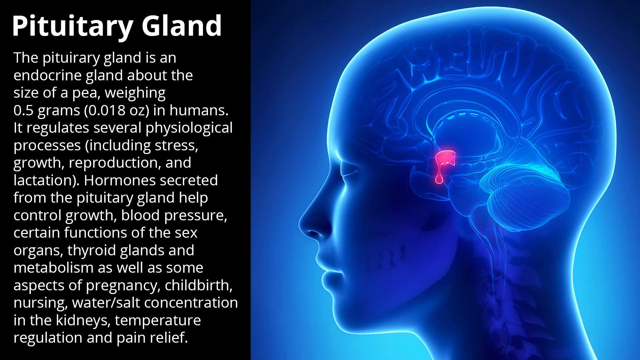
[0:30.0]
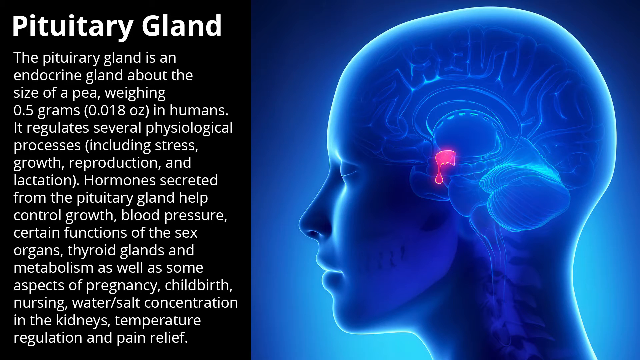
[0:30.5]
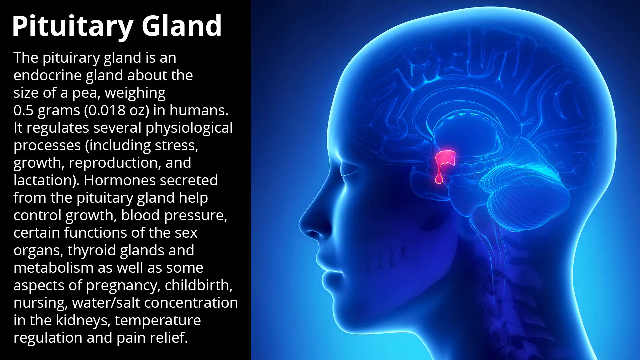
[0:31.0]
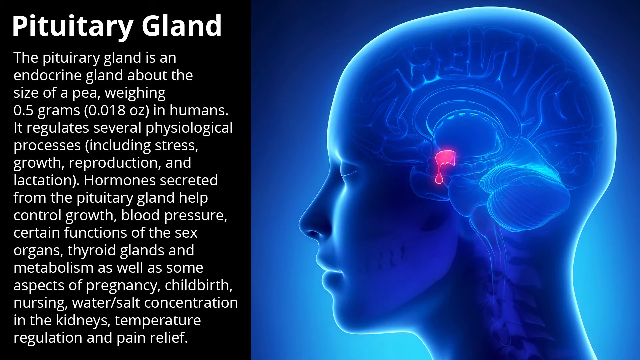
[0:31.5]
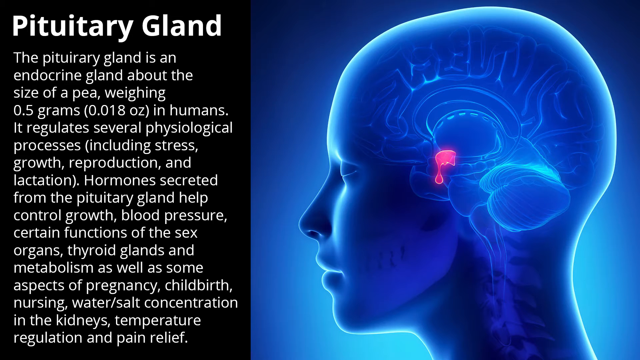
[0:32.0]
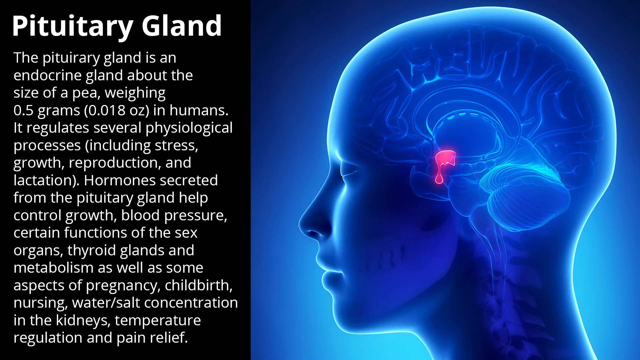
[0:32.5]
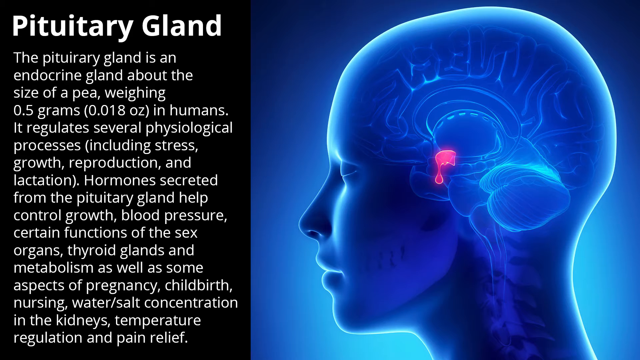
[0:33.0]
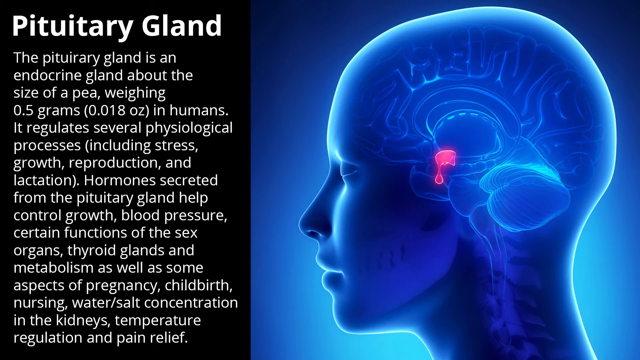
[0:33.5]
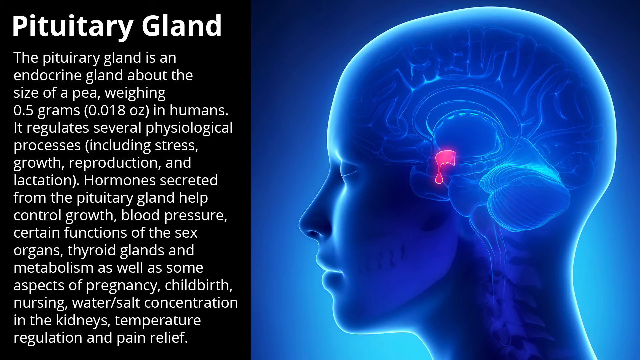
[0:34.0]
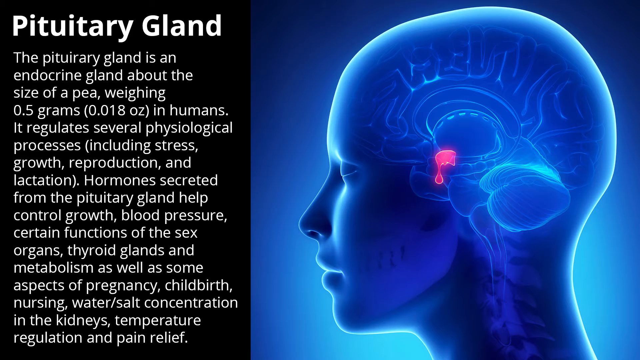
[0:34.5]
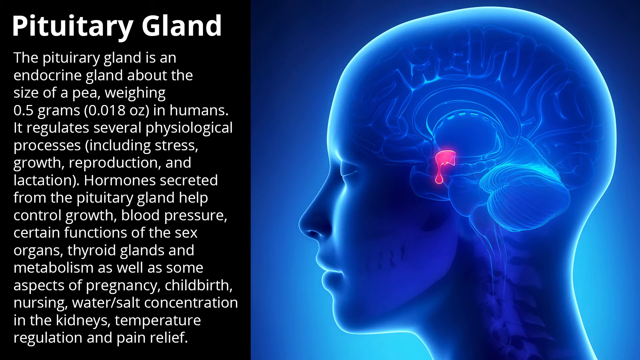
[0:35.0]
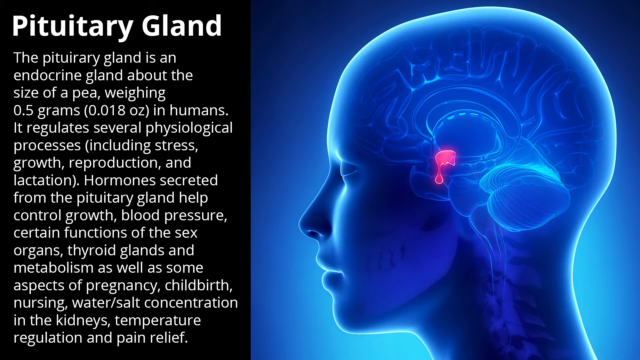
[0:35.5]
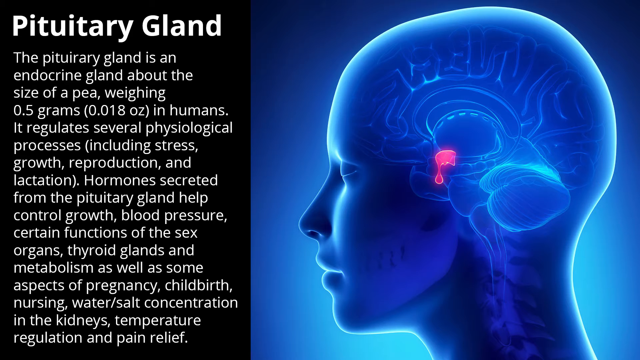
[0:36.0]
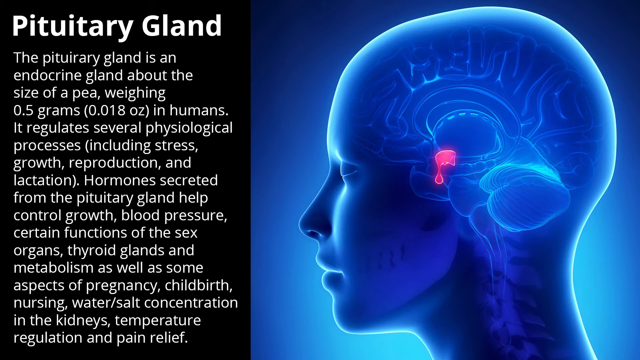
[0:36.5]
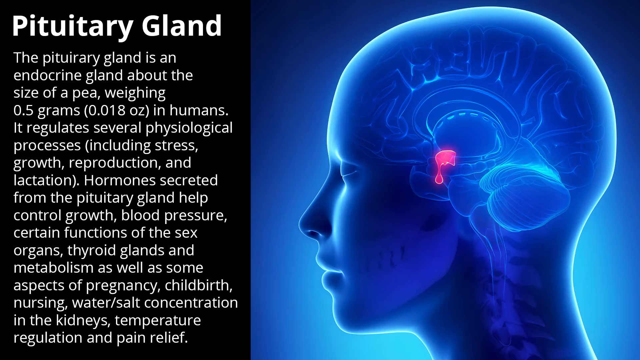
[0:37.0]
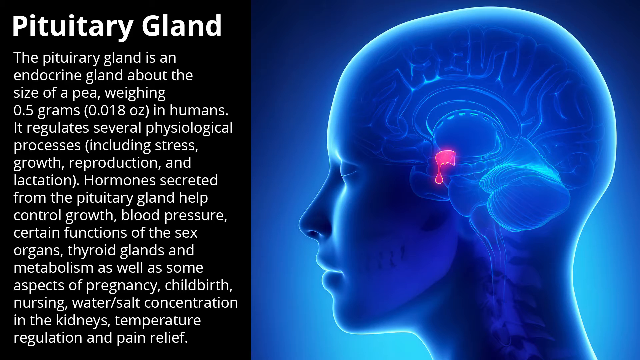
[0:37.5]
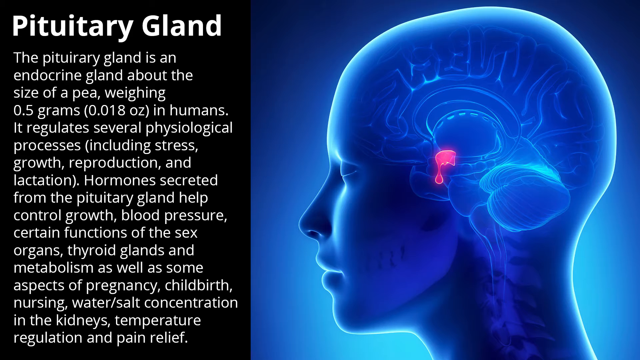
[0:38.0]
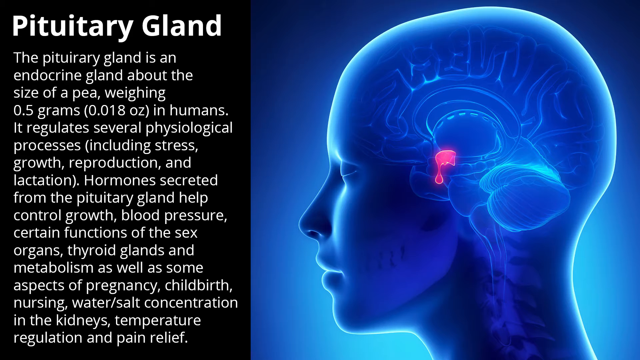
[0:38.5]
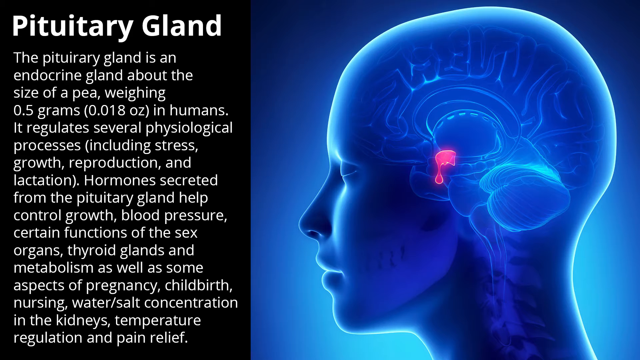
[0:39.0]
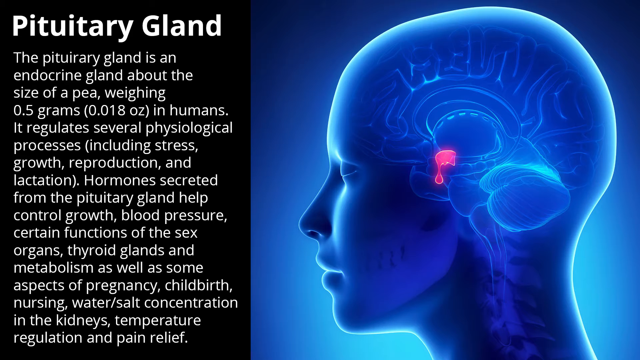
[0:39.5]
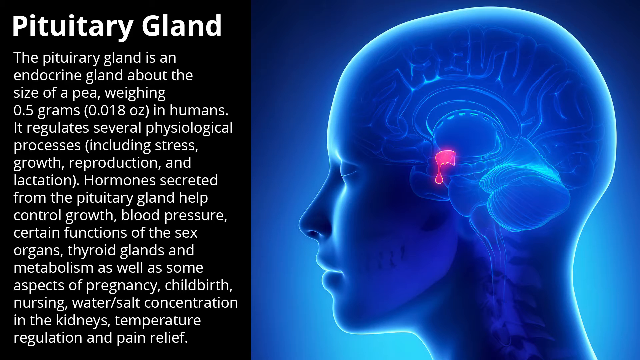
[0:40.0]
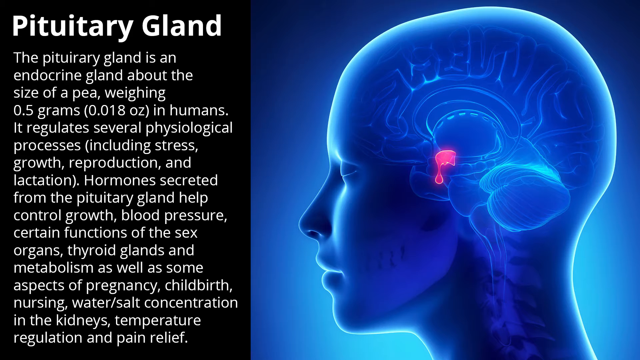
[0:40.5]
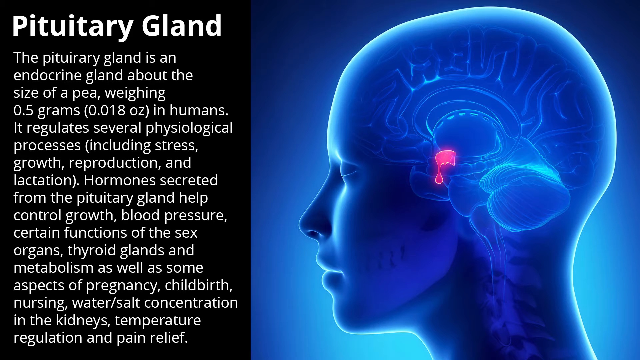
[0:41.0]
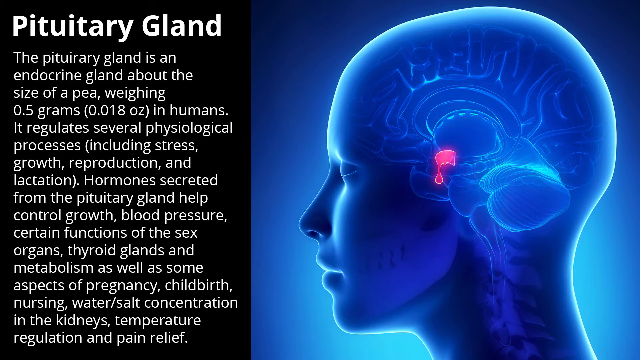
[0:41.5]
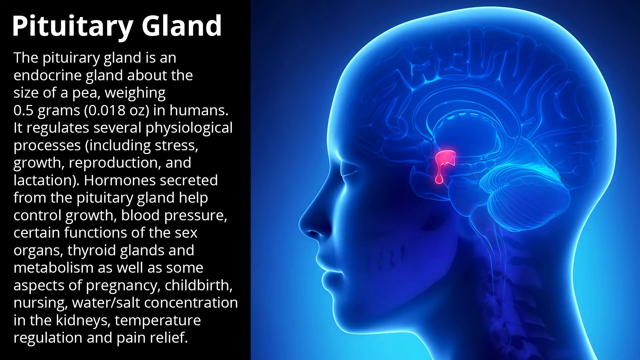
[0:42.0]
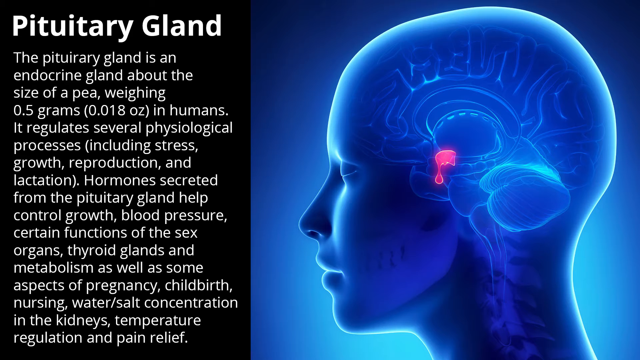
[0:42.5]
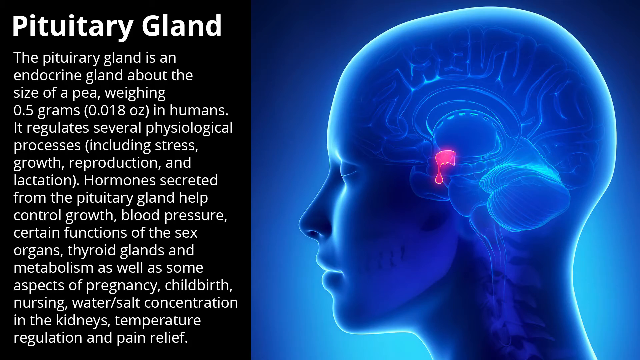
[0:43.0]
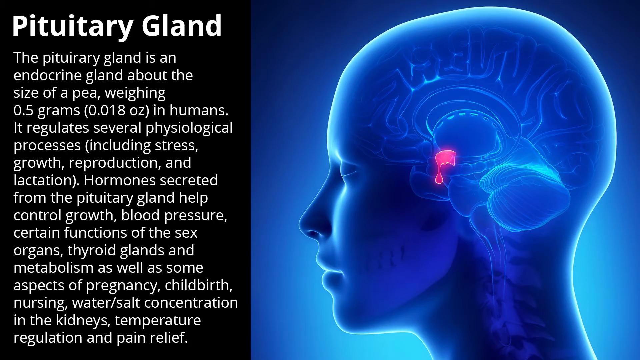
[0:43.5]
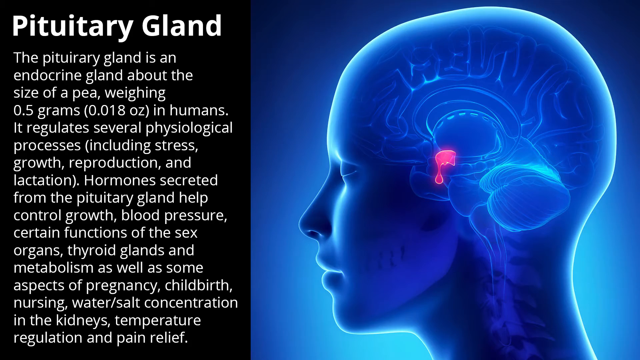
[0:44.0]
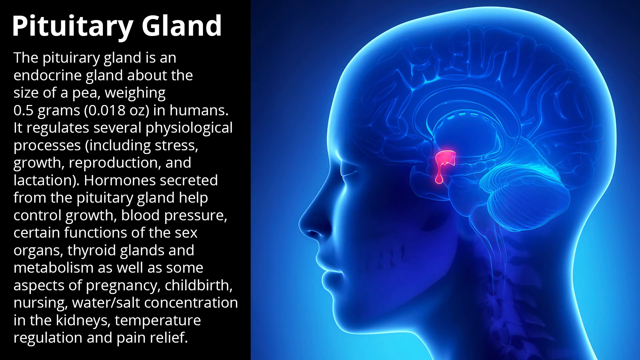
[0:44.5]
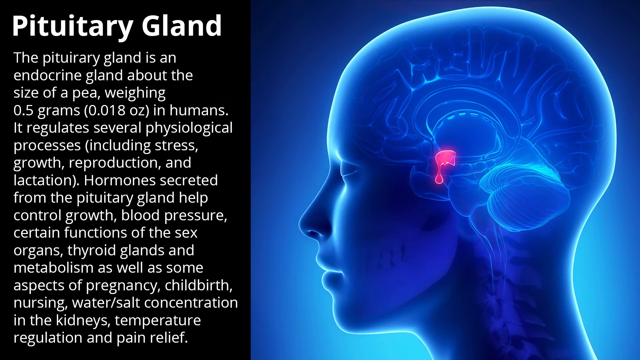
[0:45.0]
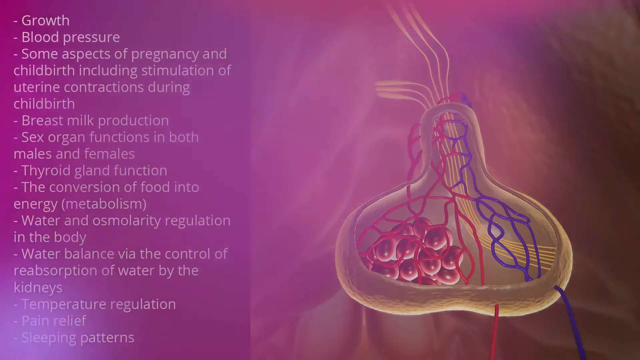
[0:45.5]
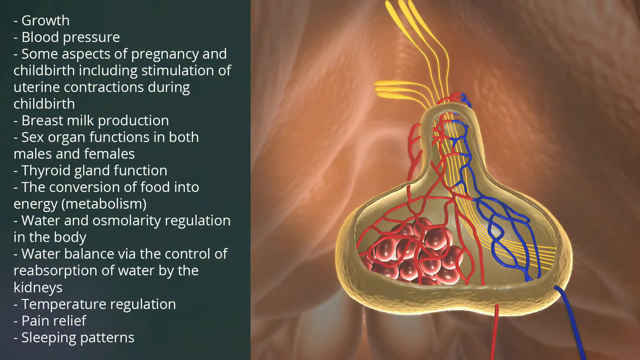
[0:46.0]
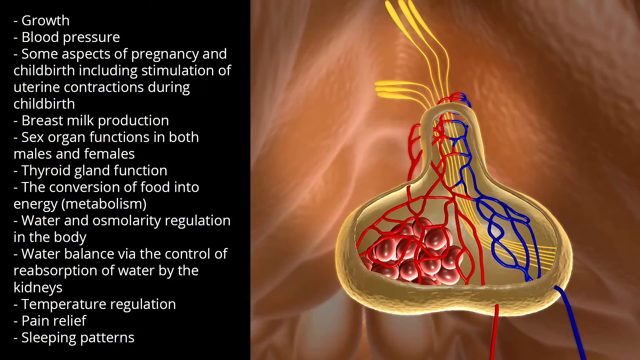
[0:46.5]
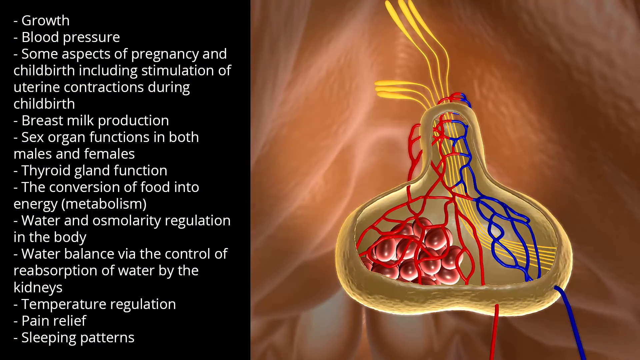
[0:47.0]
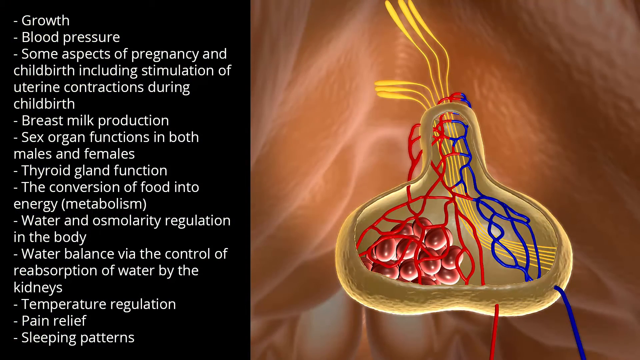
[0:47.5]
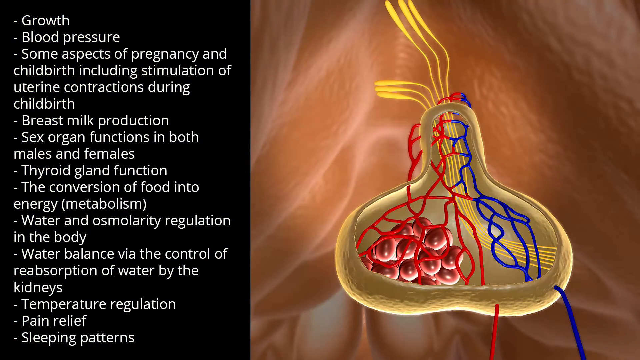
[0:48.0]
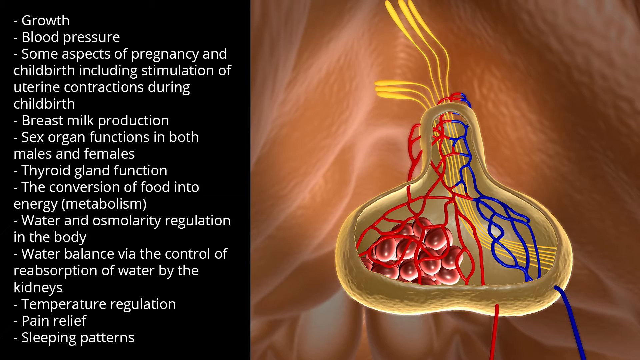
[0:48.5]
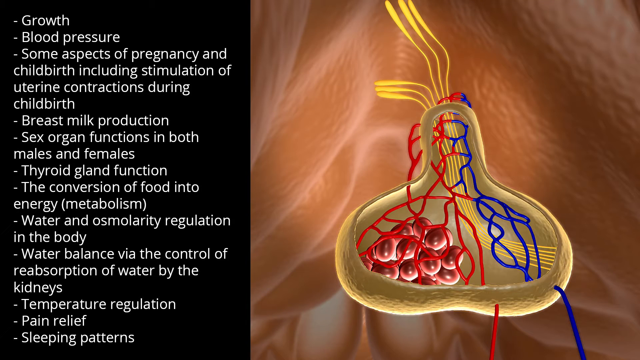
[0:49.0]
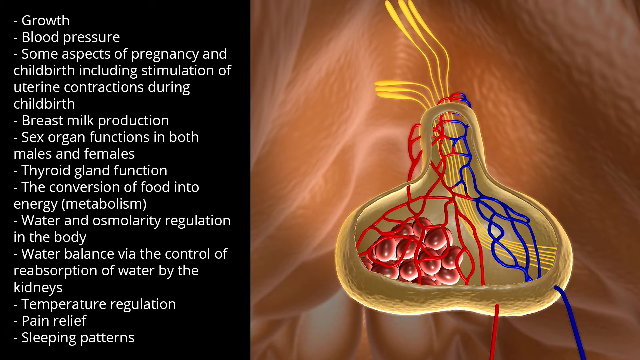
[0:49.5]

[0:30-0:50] The same pituitary gland slide stays on screen, with the background, the image on the right and the text on the left unchanged. Then the video flickers and transitions to a new slide, again with text on the left and another image on the right. The text lists growth, blood pressure, some aspects of pregnancy and childbirth including stimulation of uterine contractions during childbirth, breast milk production, sex organ functions in both males and females, thyroid gland function, the conversion of food into energy (metabolism), and water and osmolarity regulation in the body. The image on the right appears to be some kind of internal biological structure.